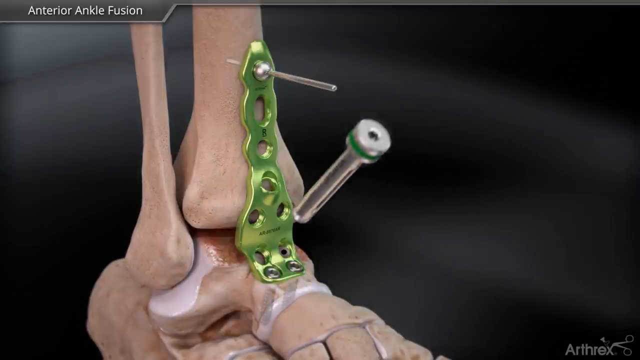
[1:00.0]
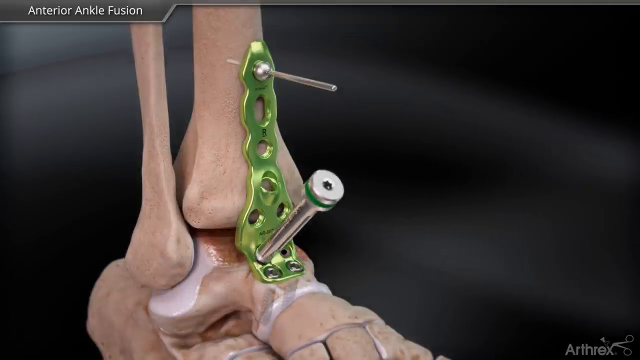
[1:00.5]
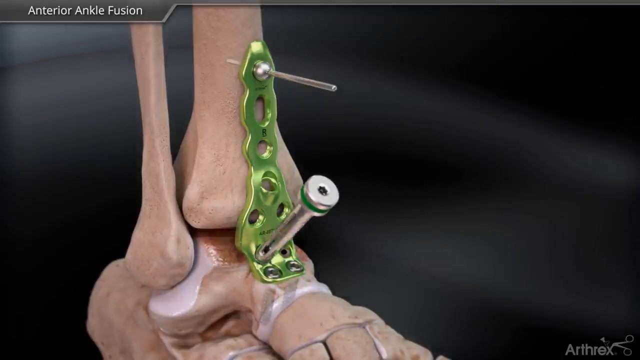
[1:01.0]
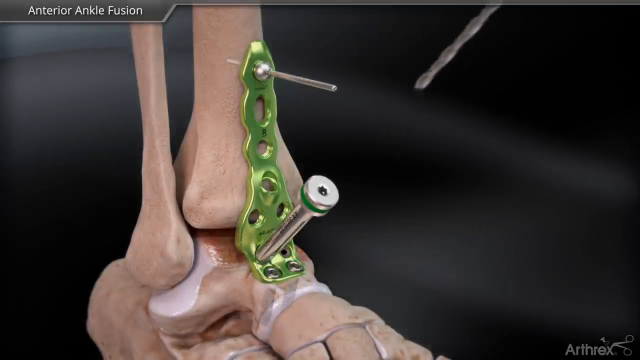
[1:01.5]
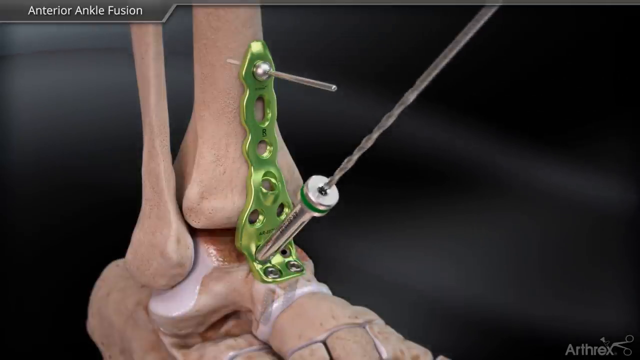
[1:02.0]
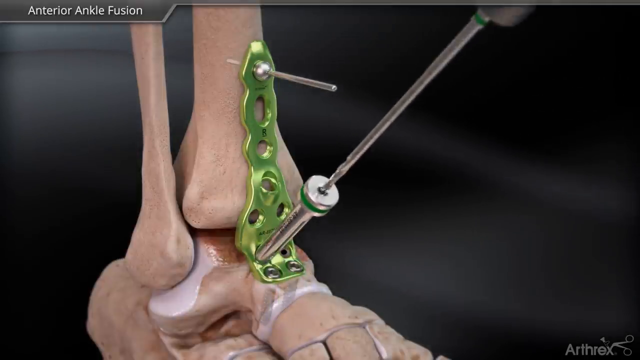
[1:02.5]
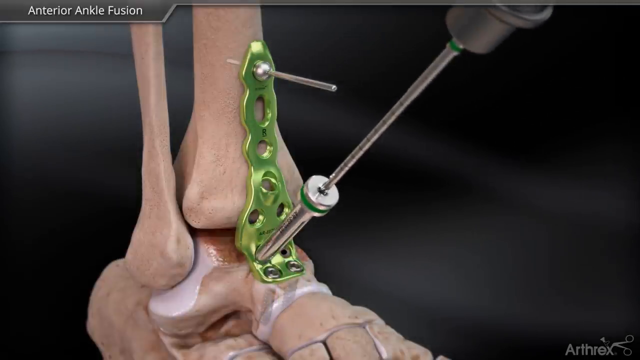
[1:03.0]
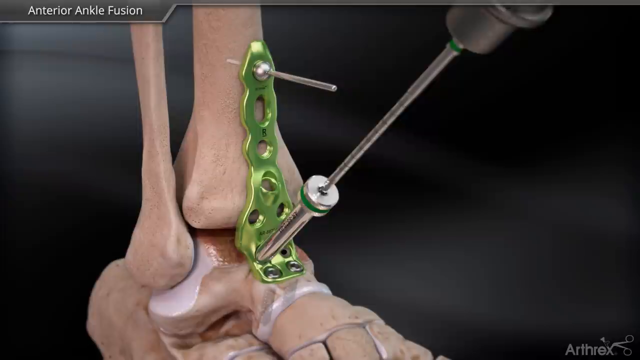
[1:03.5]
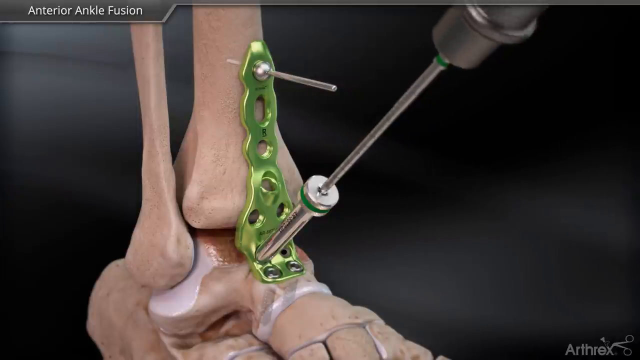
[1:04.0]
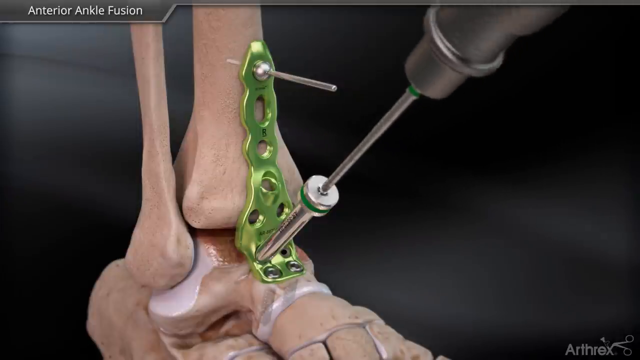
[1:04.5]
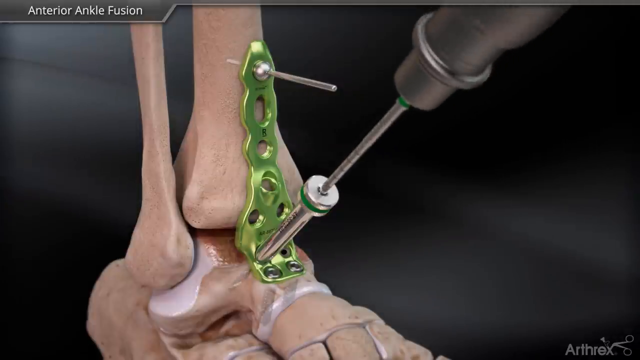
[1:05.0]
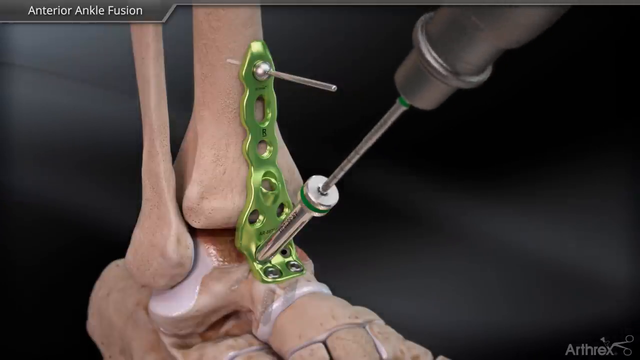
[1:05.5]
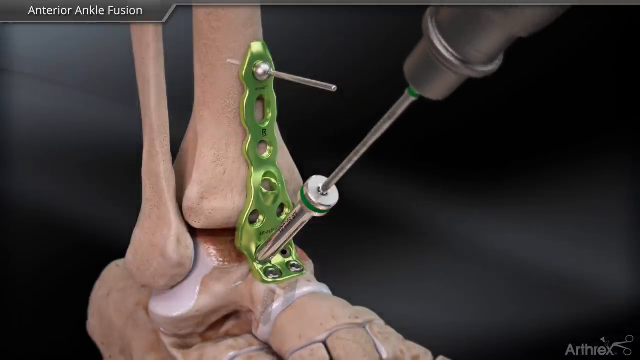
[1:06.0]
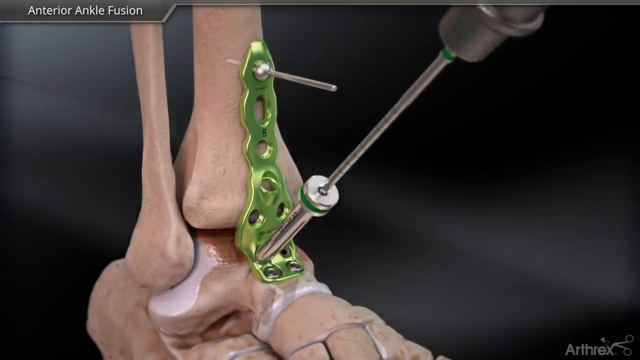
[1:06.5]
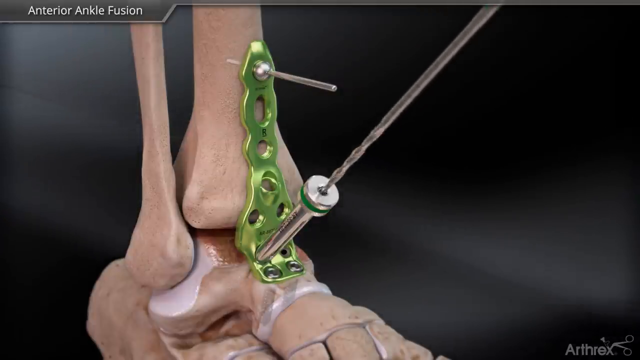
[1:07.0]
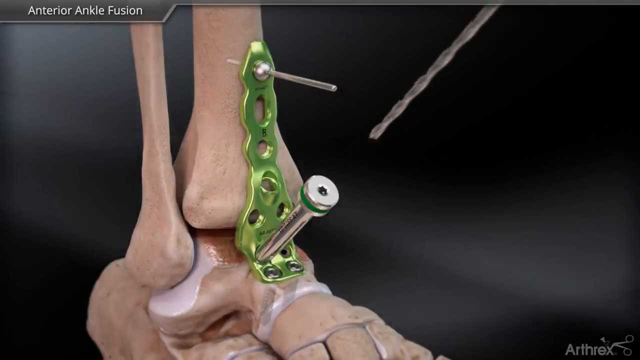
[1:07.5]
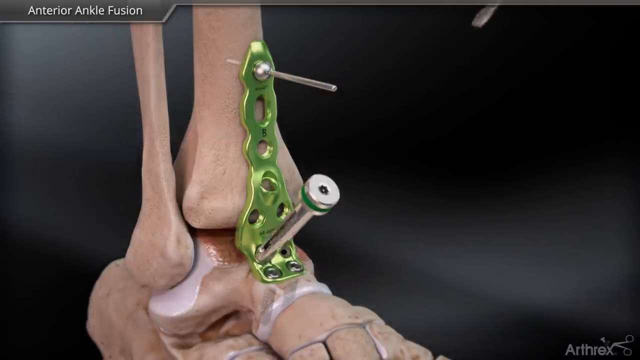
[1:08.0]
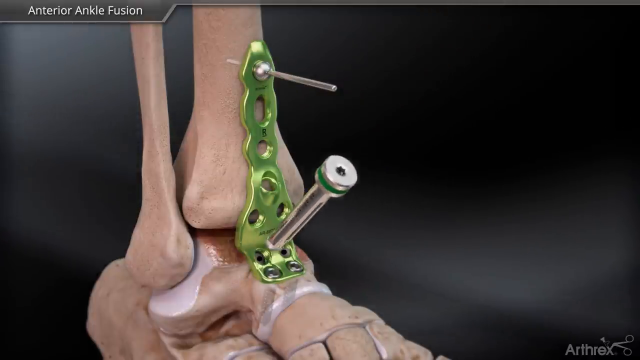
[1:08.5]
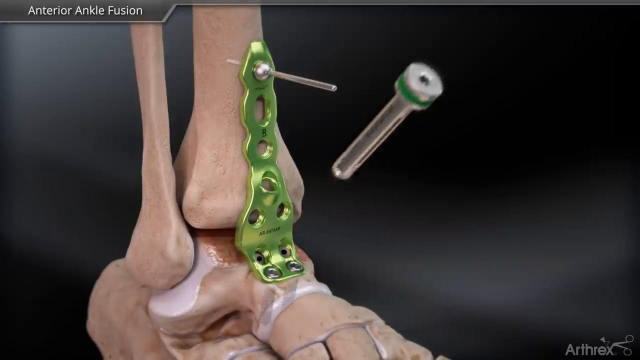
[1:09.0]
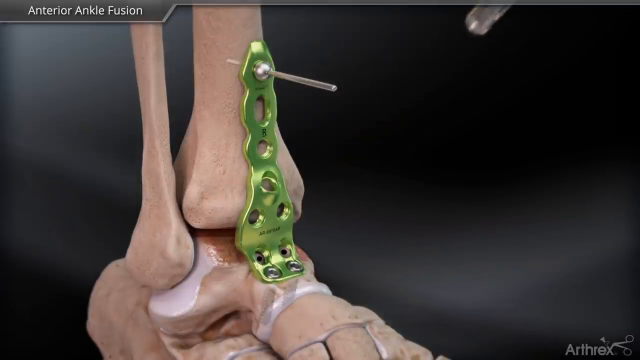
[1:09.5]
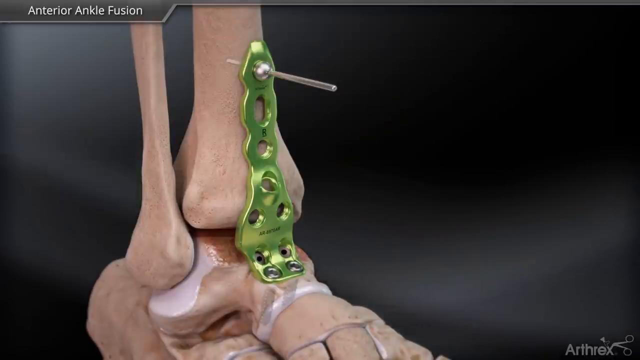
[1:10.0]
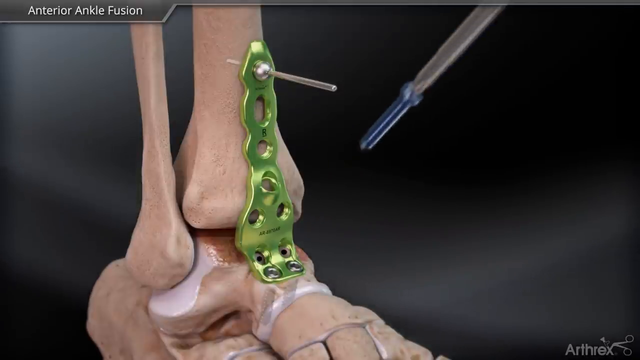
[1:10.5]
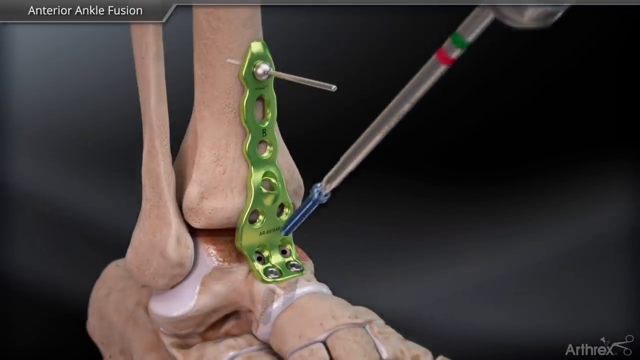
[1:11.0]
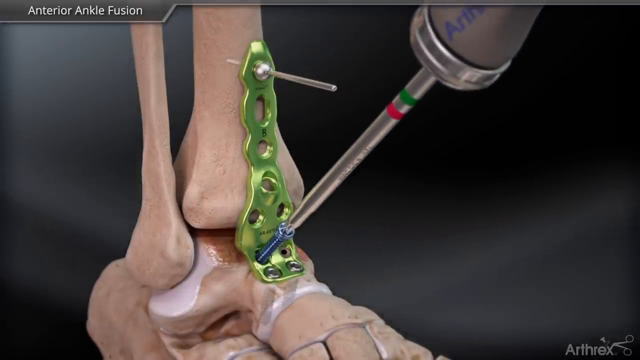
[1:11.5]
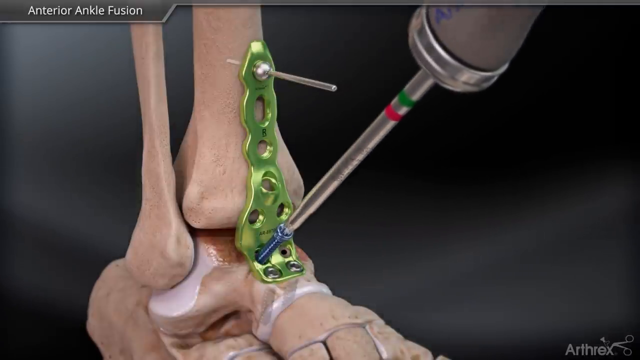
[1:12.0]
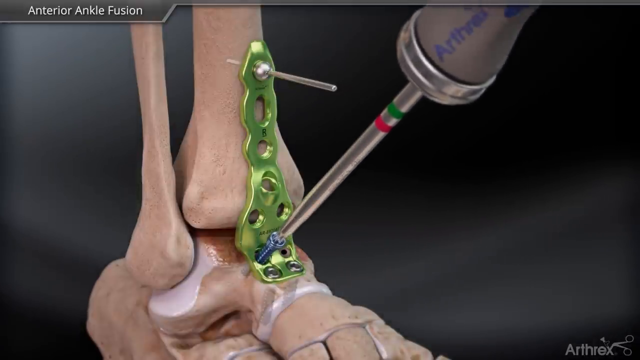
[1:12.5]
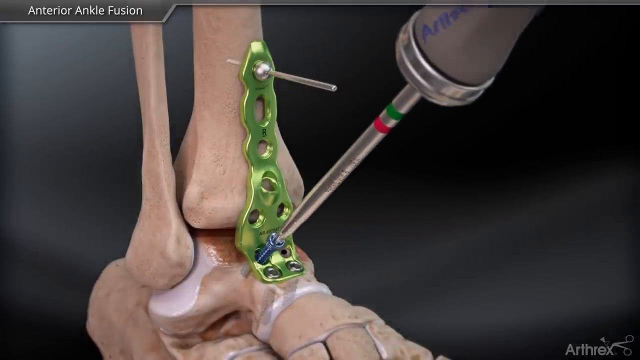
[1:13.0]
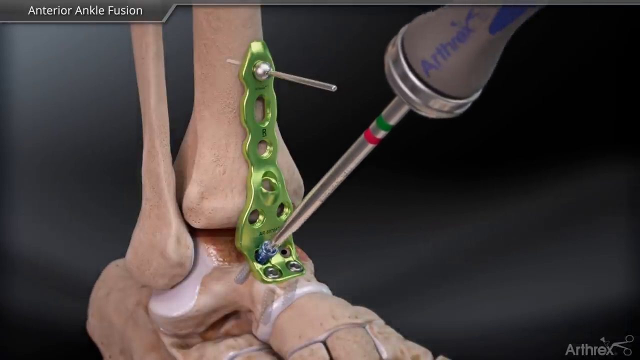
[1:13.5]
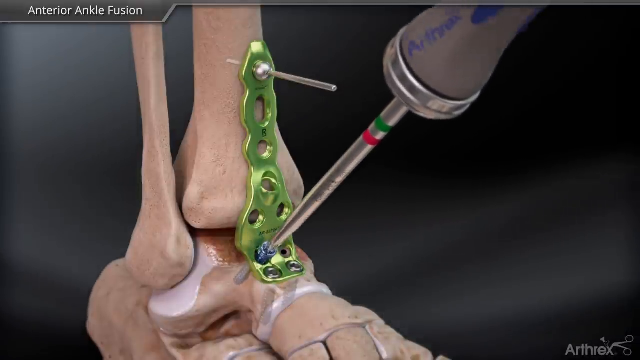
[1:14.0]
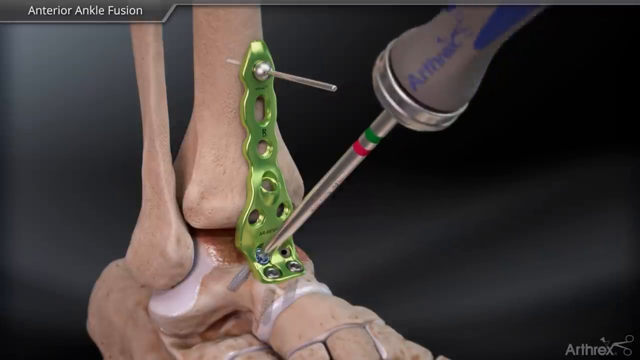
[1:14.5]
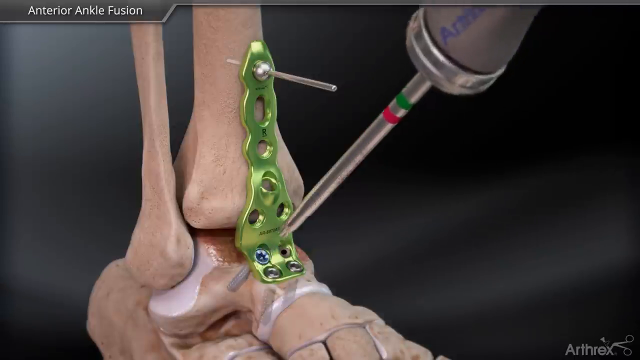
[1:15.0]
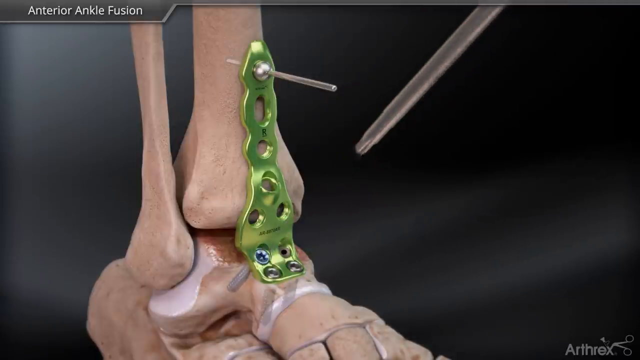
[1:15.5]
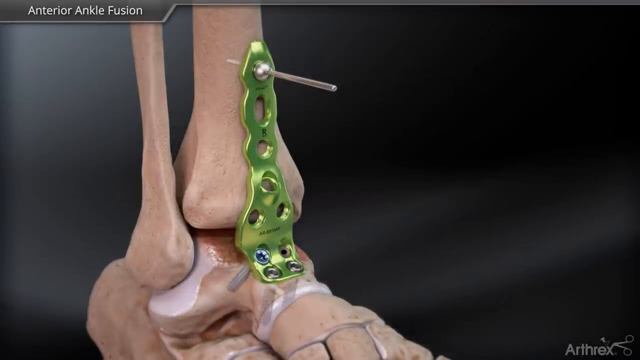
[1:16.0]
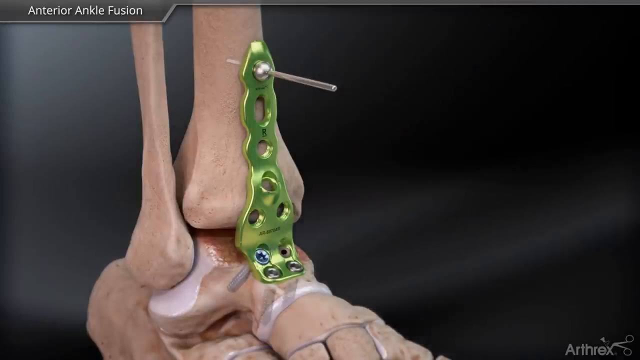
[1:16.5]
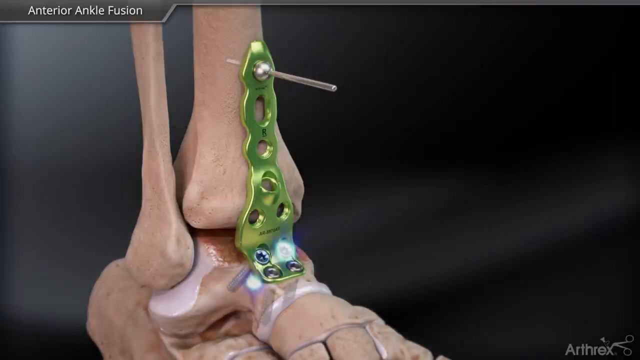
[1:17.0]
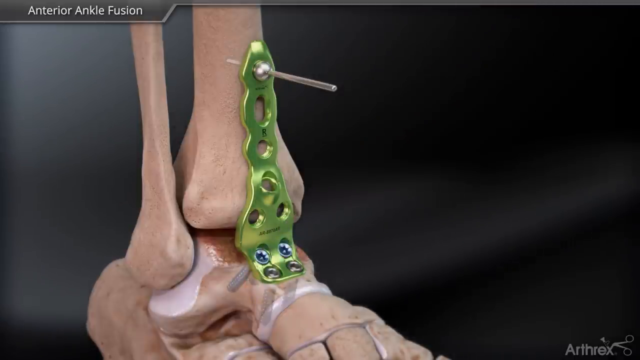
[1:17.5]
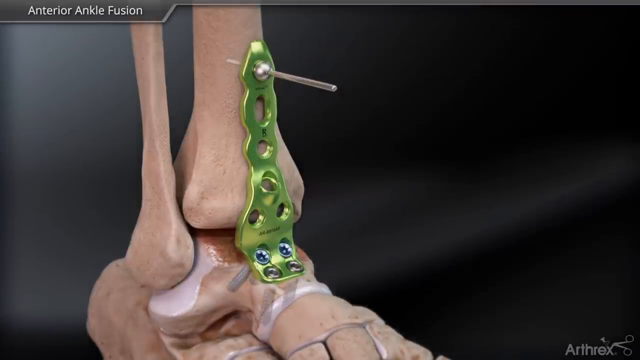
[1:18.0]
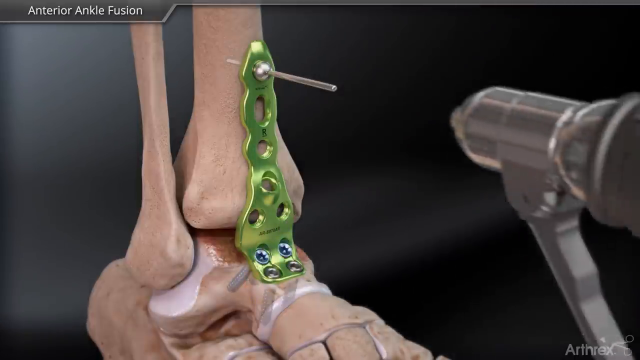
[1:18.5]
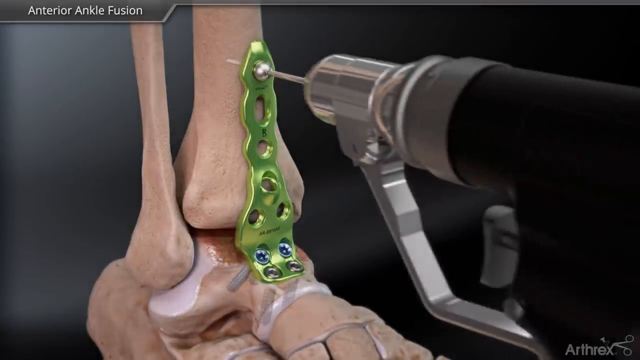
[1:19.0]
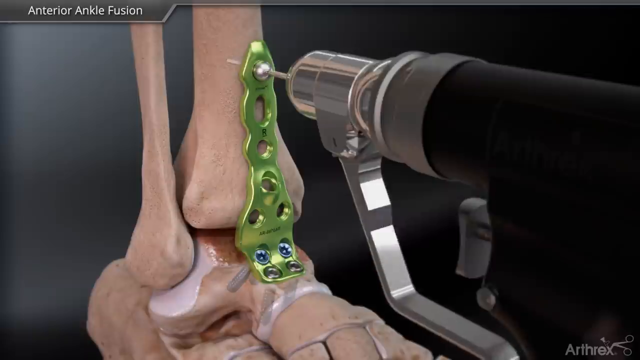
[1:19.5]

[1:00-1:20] The banner at the top left of the screen reading "anterior ankle fusion" continues to be shown. Another very long screw is inserted into the tool placed on top of the bracket on the bottom left of the foot, and is inserted by the drill. The drill goes into the bone multiple times to make the hole as big as needed. The tool stabilizing the device is removed and a dark blue screw is placed inside the bottom left bracket, and another similar screw is placed on the right side. The drill then goes up to the top pin in the top screw and seems to be removing it. The drill has a large, silver, trigger-like handle, and the rest of the drill is black. The bits used to drill the holes in the bone are also silver.